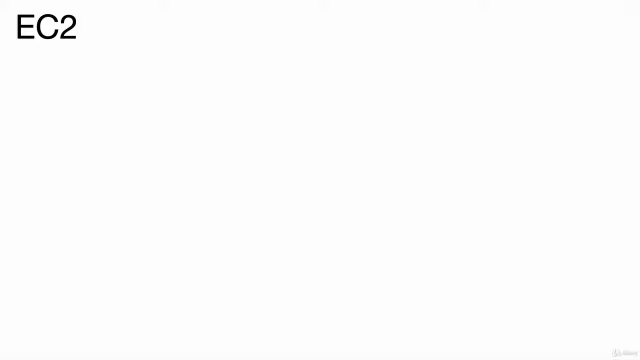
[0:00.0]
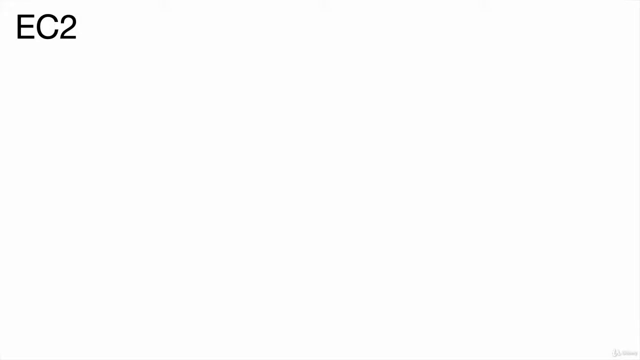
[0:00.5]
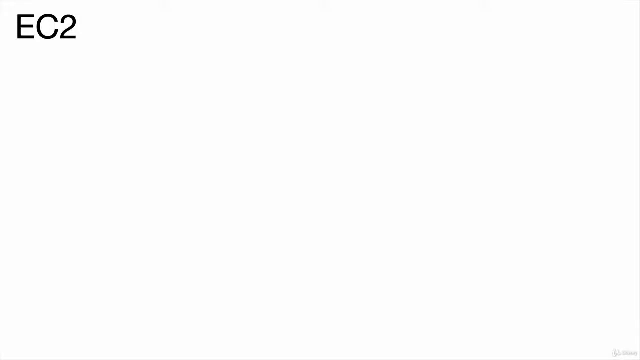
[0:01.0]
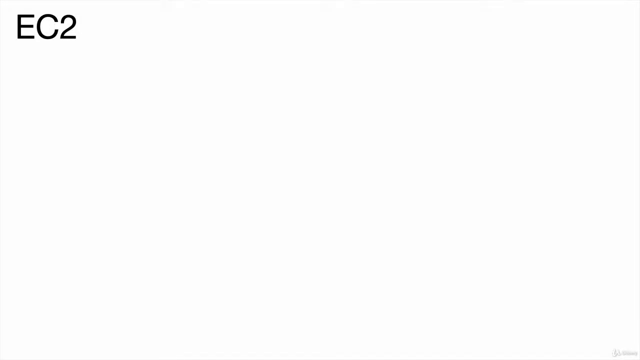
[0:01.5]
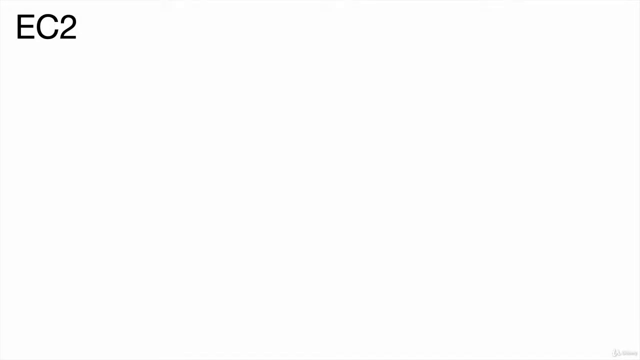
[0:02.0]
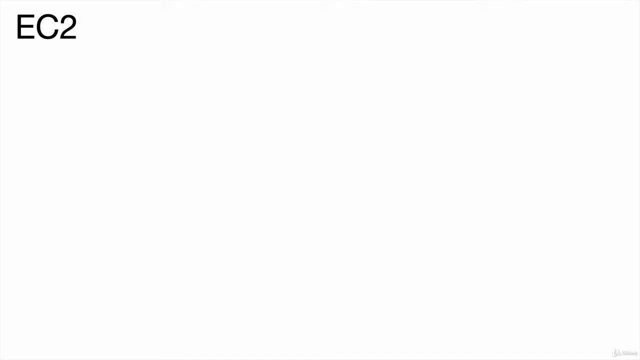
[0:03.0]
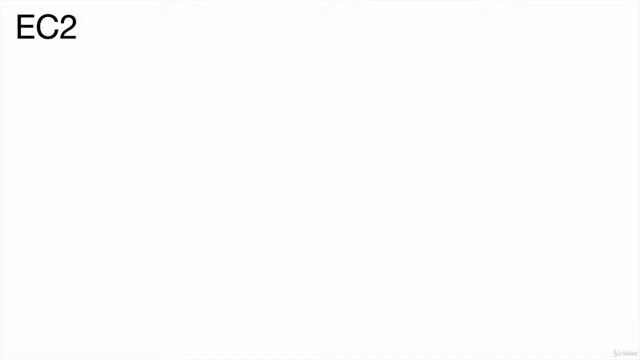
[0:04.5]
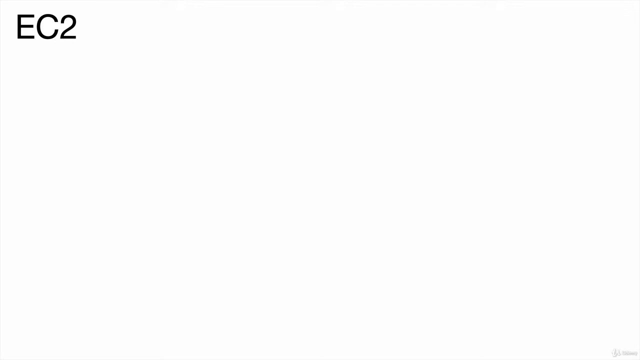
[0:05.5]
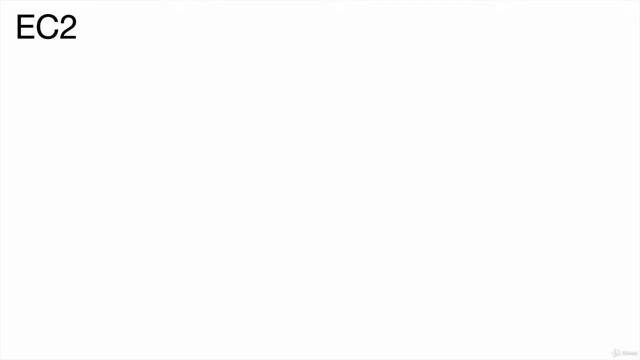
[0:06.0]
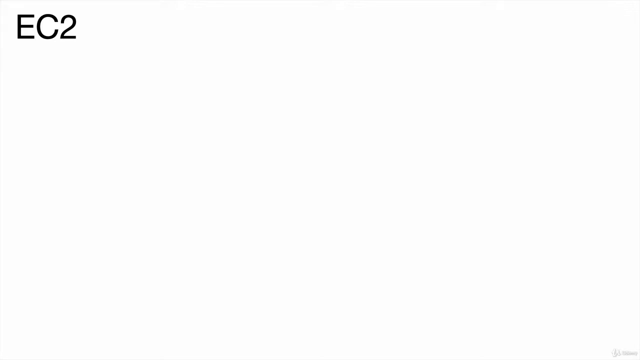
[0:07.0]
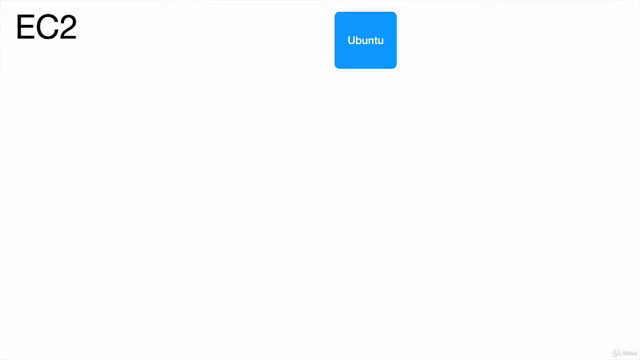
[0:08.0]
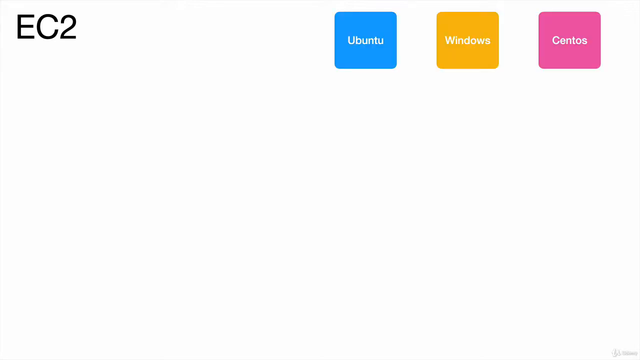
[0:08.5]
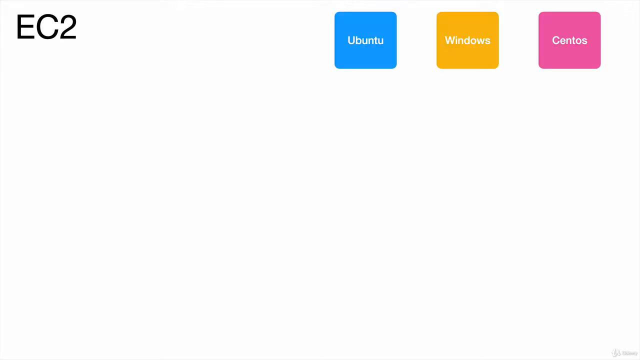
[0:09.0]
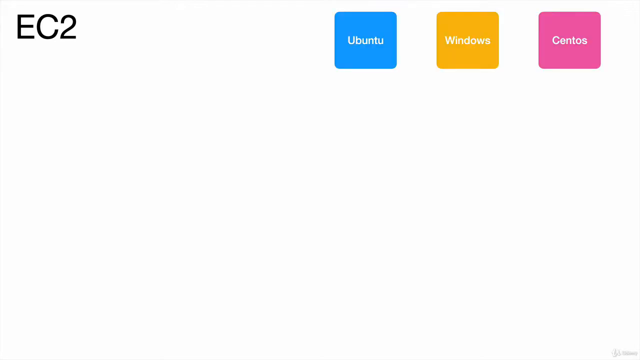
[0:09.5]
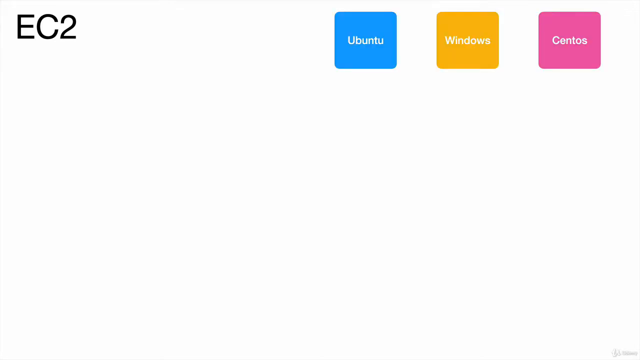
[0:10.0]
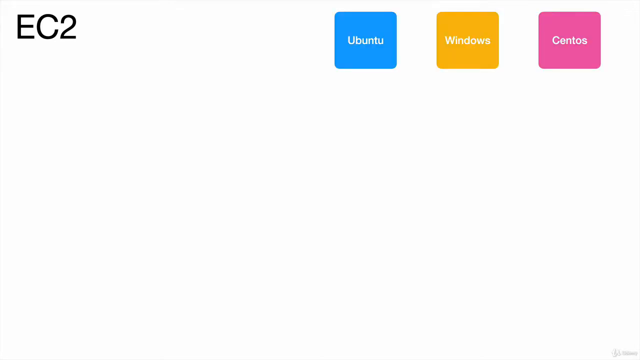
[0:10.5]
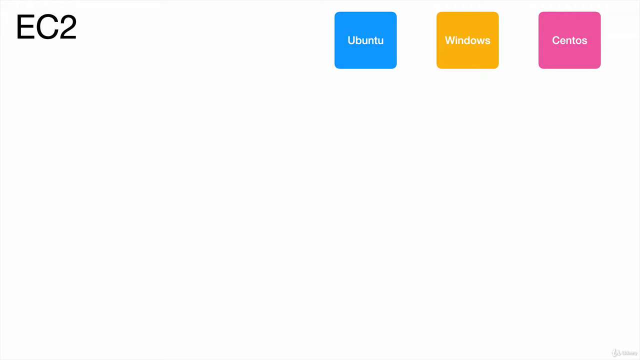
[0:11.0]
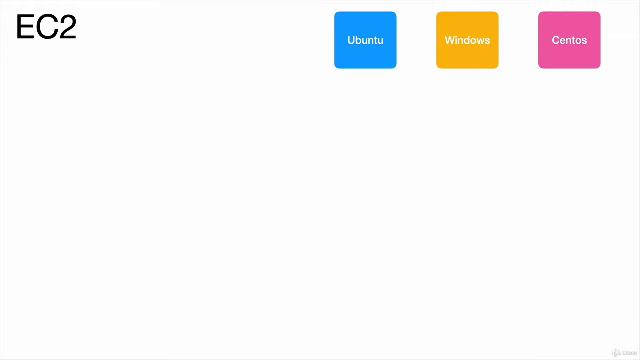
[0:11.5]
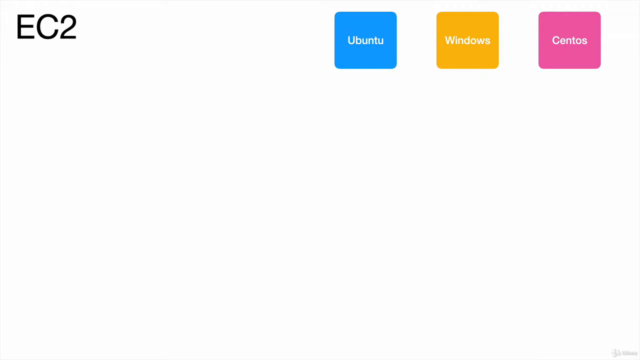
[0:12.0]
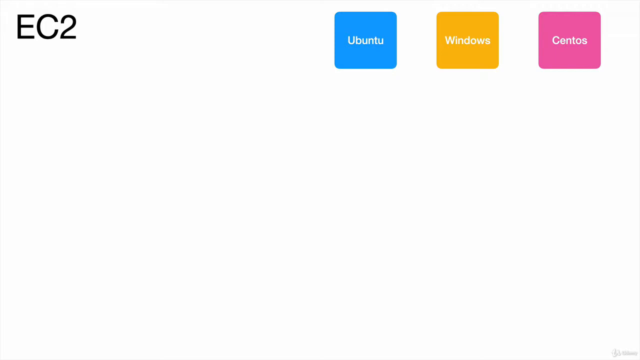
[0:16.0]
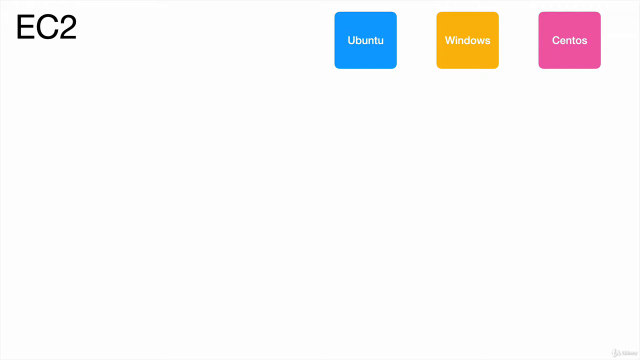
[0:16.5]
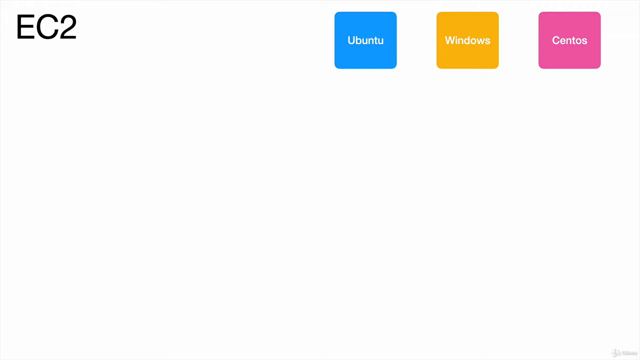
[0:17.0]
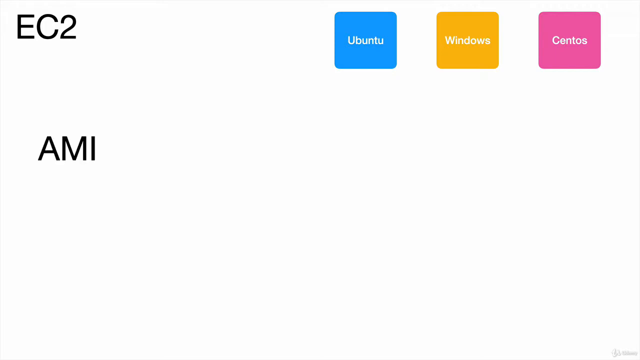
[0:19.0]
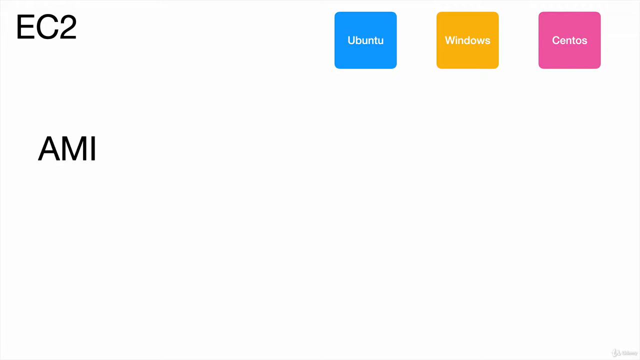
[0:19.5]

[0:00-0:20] The video is slightly wider than it is tall and starts with very little on it: a plain white background with "EC2" in all capital letters in the upper left. Three icons then load in the top right area: a blue one that says "Ubuntu", a yellow one that says "Windows" and a pink one that says "CentOS". The icons are simply squares in those colors with the words written in white. Each icon is approximately maybe about 10% of the video's width and apparently somewhere around 15 to 20 percent of its height, and the "EC2" on the left is about the same width. Not much else happens.